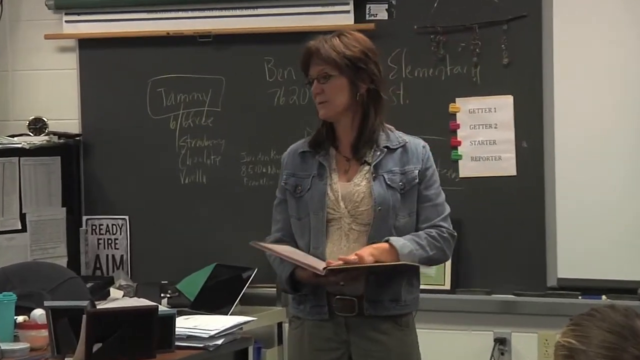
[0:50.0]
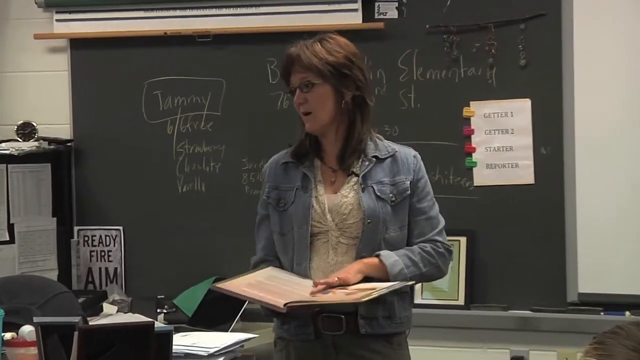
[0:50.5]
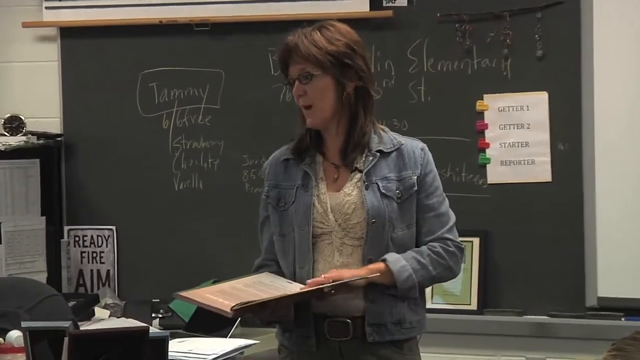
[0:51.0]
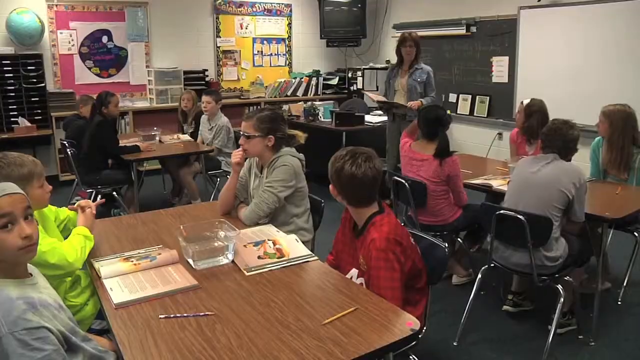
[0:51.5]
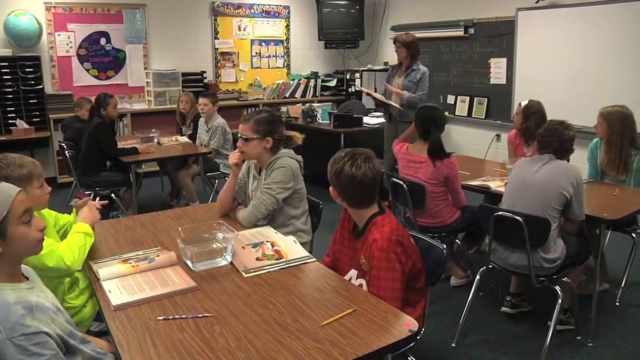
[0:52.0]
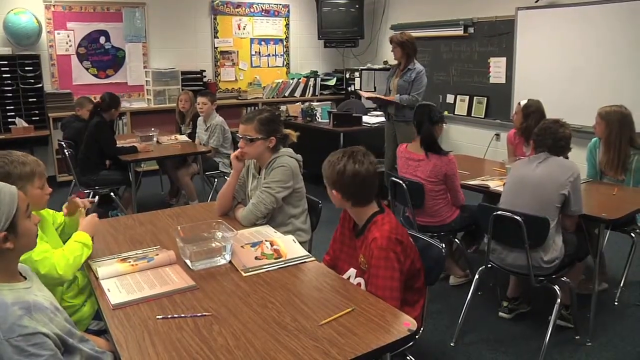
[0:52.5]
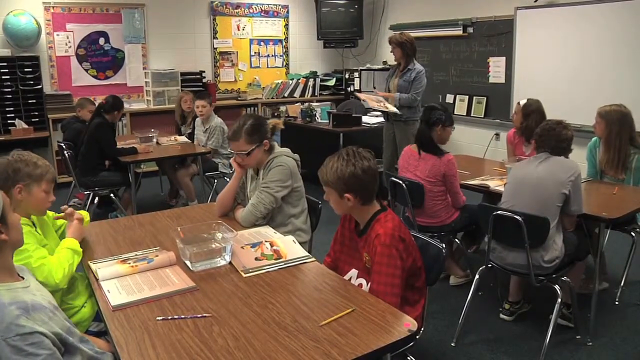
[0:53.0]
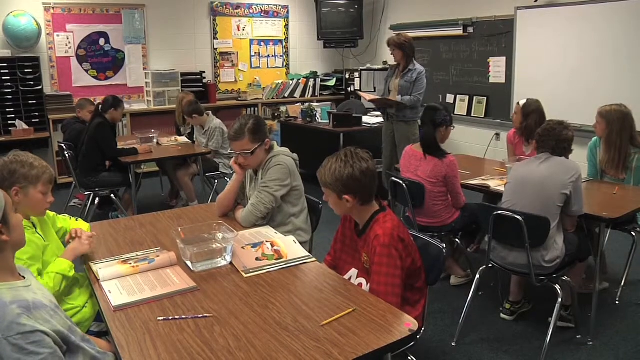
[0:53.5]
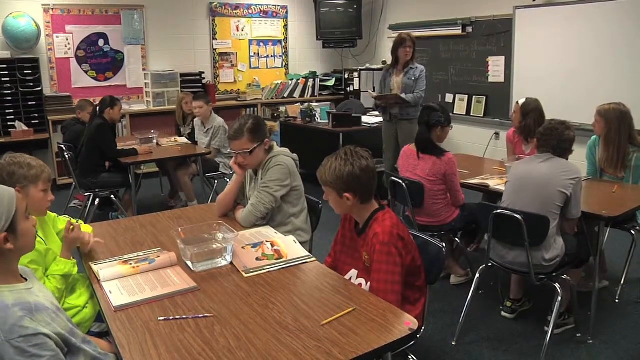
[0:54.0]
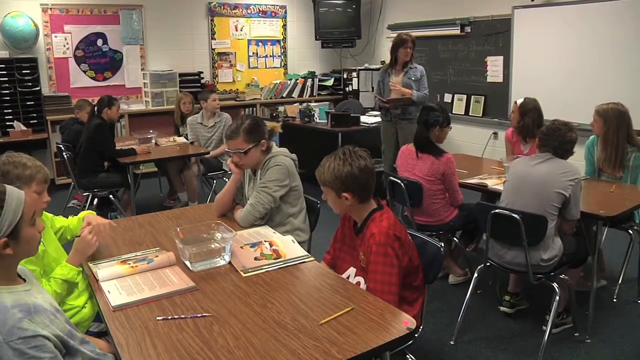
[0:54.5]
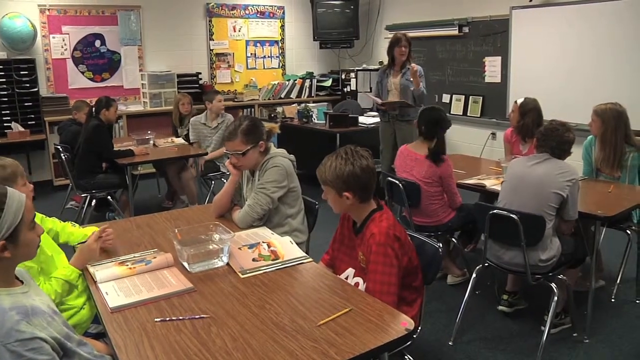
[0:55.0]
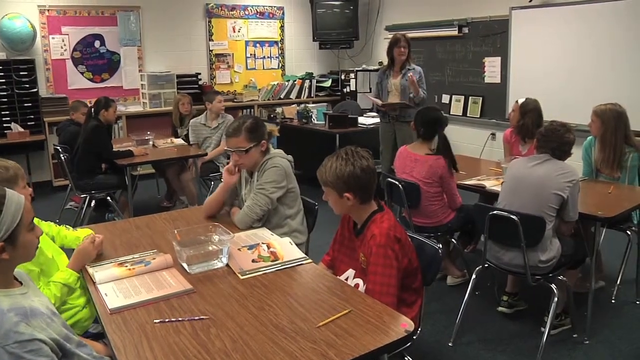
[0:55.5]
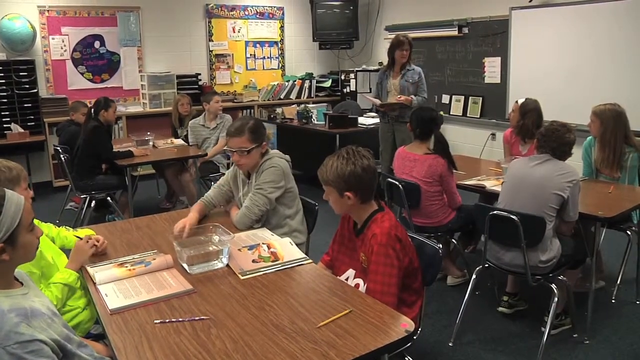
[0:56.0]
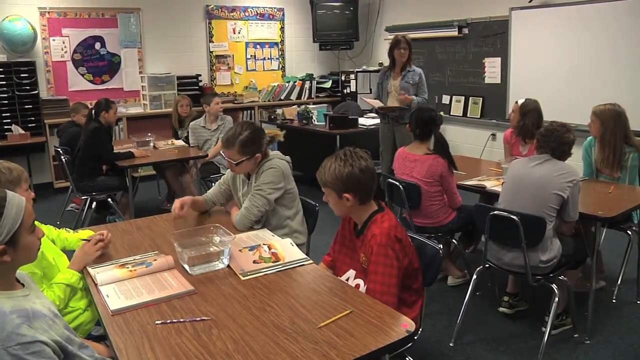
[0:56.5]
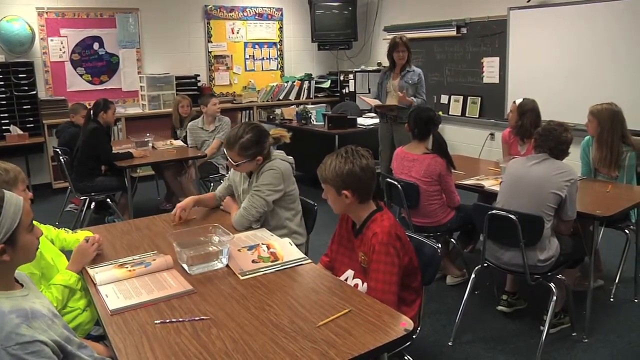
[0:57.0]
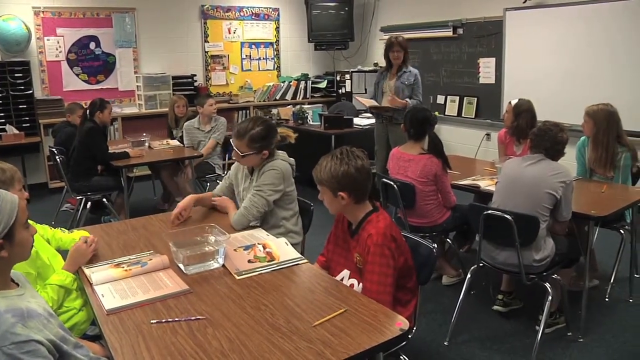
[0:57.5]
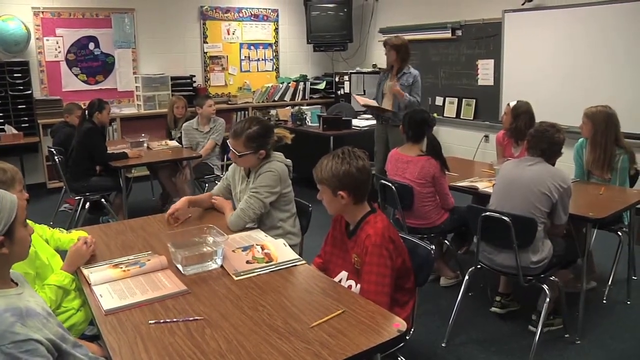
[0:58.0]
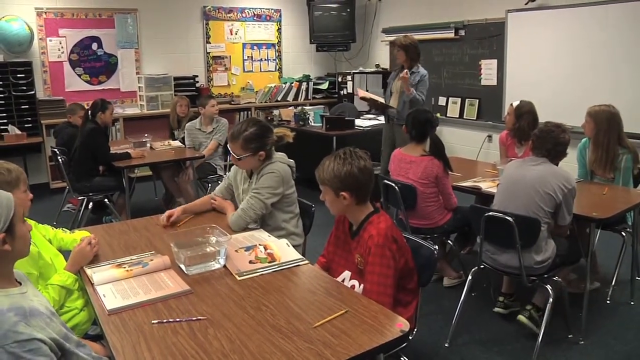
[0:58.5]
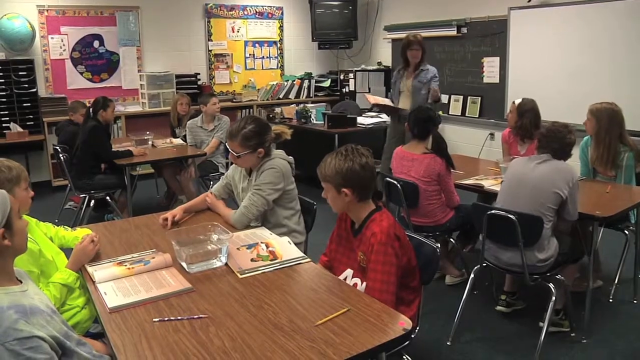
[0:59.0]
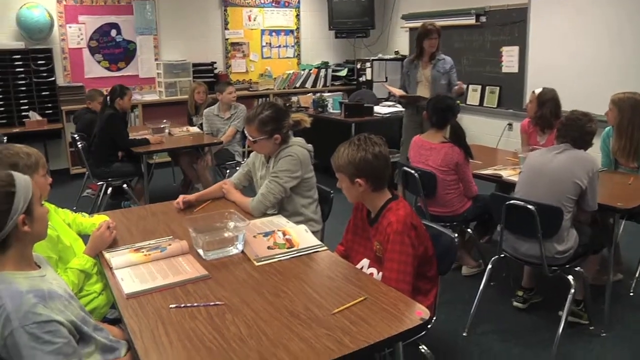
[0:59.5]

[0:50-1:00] The teacher reads instructions and notes to the children and explains them. The students are seated in groups on chairs, in pairs of a girl and a boy, with some pairs of girls, and they are attentive. There is a book on each table, along with water and things for the practicals. Behind the teacher there is a poster reading "ready fire aim", and there are a blackboard and a whiteboard behind, with posters behind the board. The floor is black, and the children wear shoes. One child wears a Manchester United jersey and another a luminous sweater.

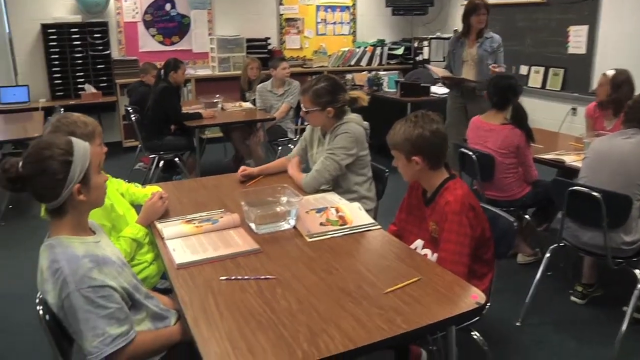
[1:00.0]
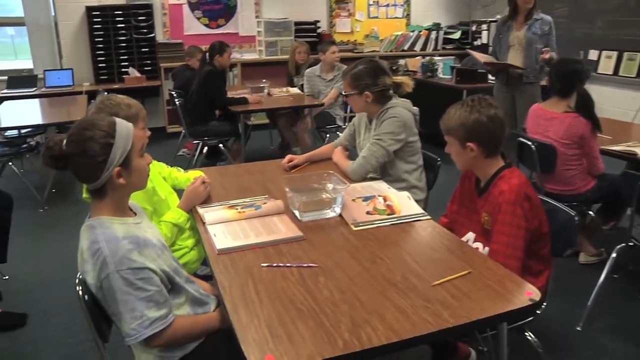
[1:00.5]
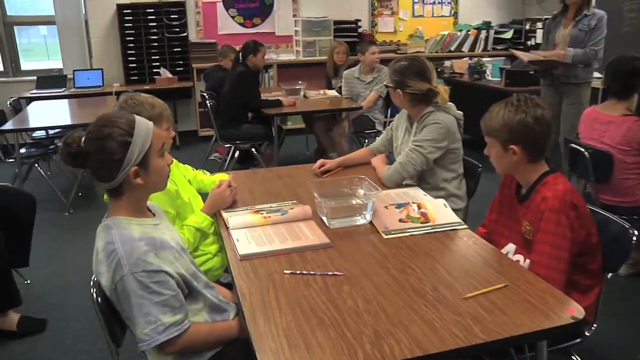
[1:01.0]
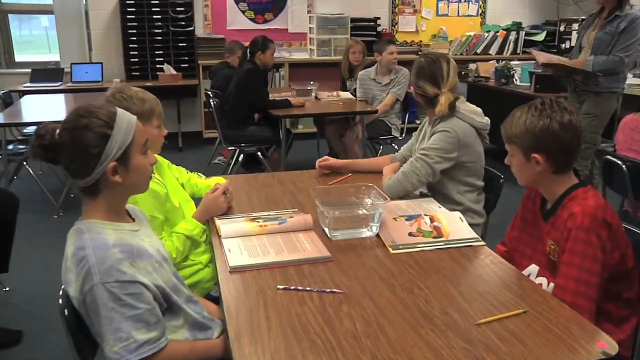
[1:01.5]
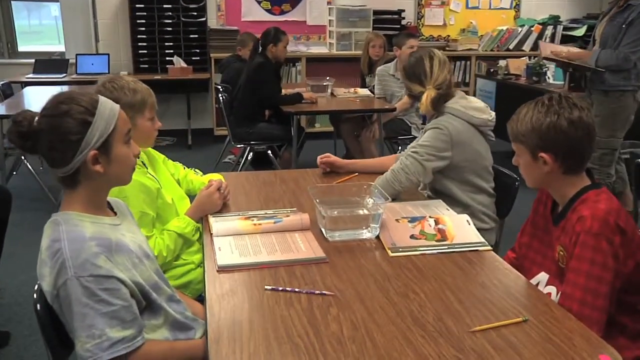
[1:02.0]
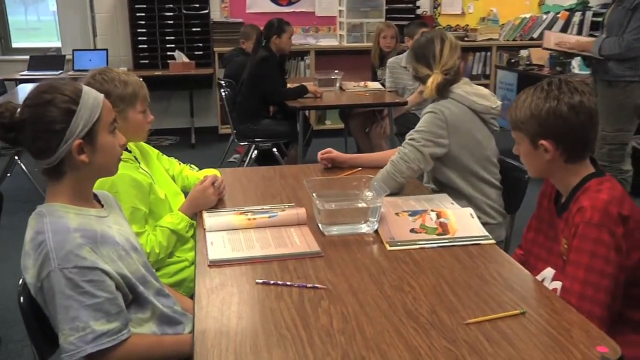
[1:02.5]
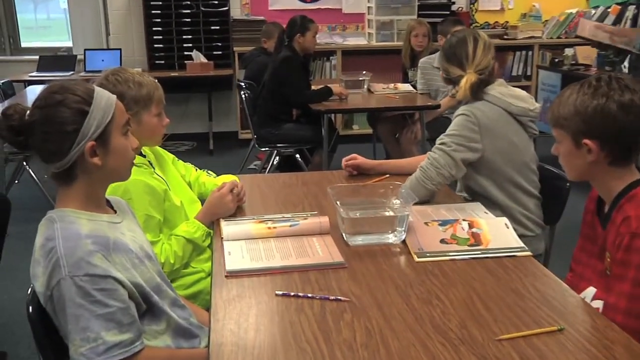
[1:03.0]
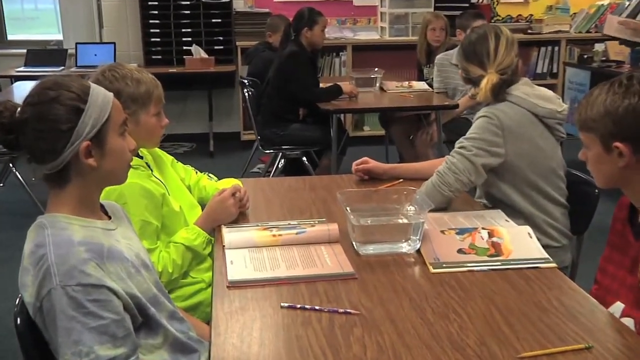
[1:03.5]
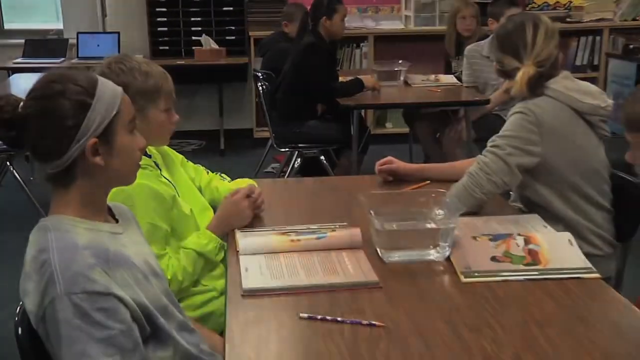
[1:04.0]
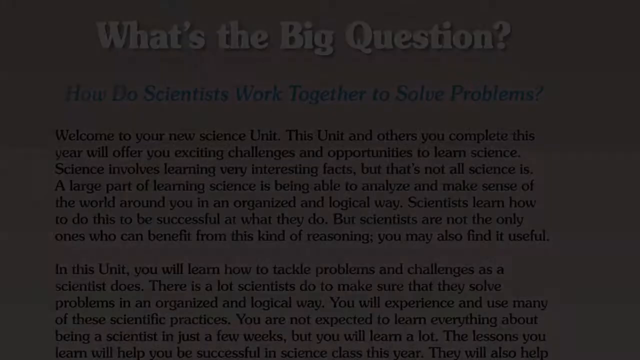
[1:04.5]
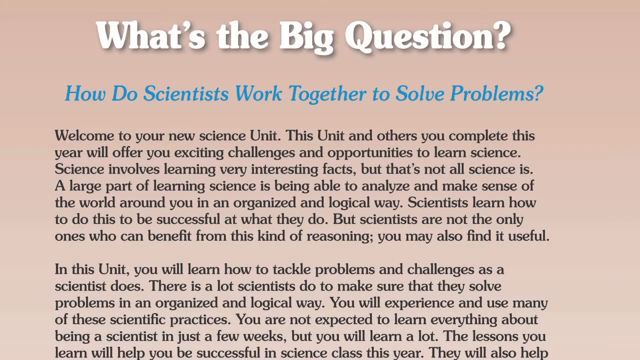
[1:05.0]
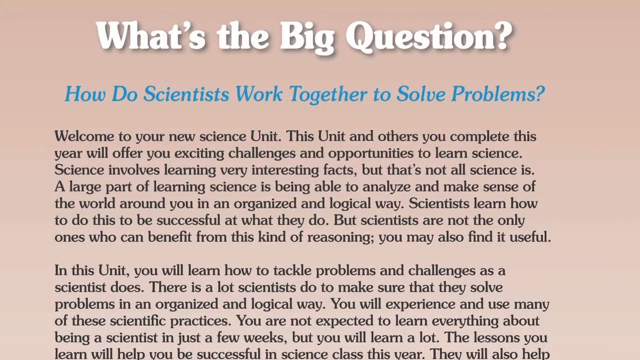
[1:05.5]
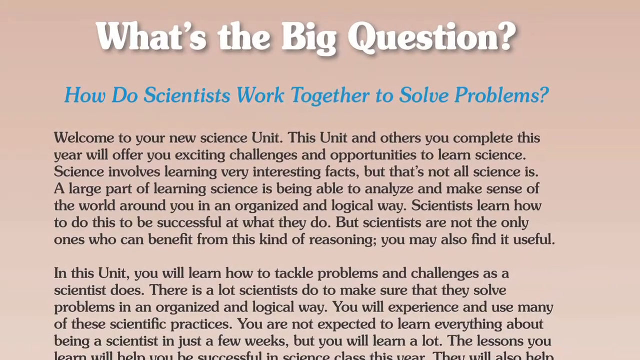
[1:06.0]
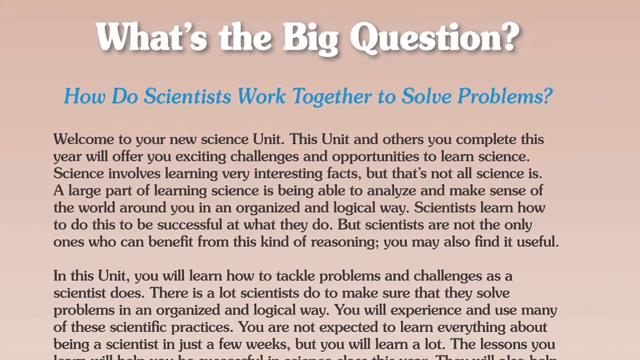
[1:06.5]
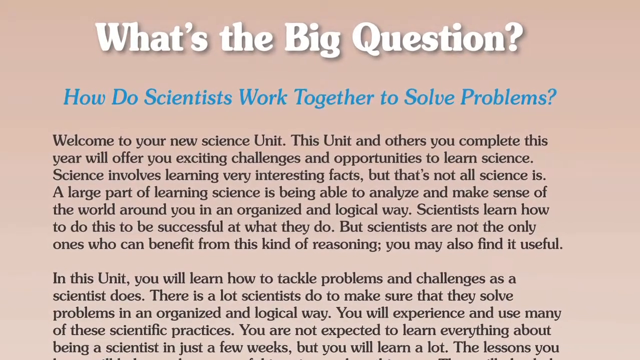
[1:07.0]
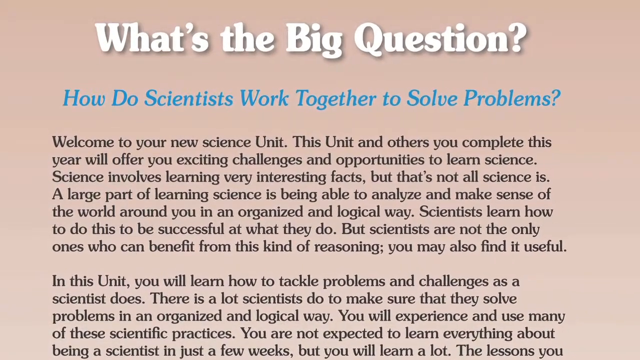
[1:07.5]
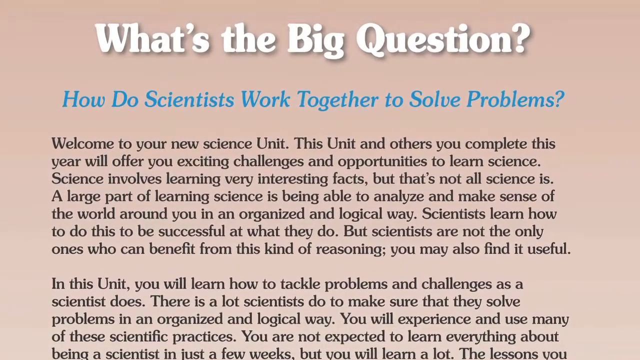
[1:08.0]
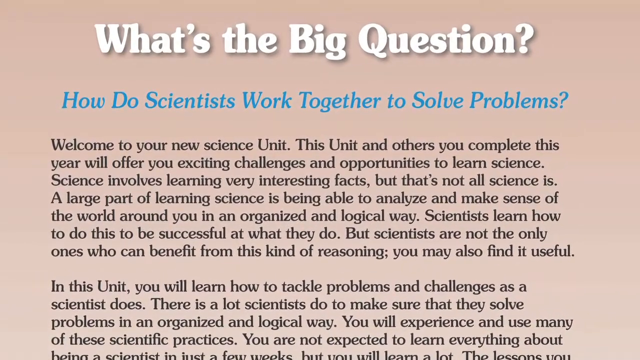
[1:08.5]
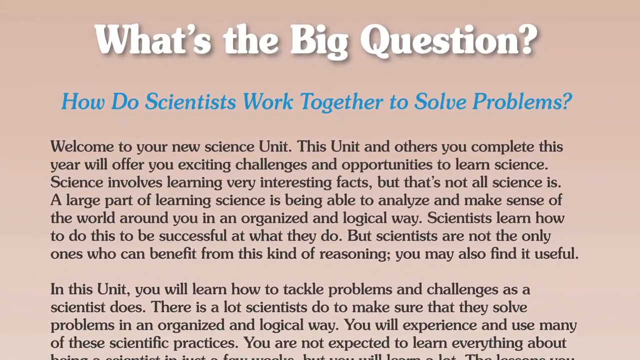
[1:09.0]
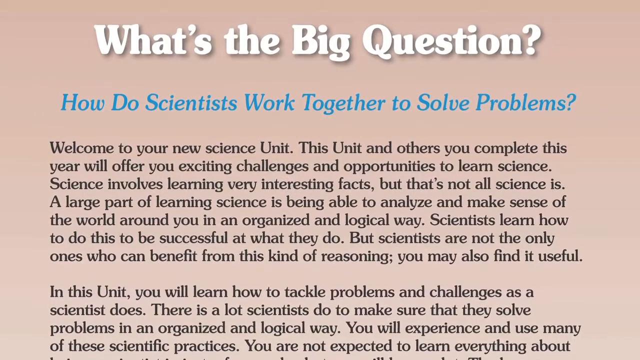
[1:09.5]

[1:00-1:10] The teacher explains the big question of the day to the children: how do scientists work together to solve a problem? The book's text begins "welcome to our new science" and describes learning science and how scientists work together.